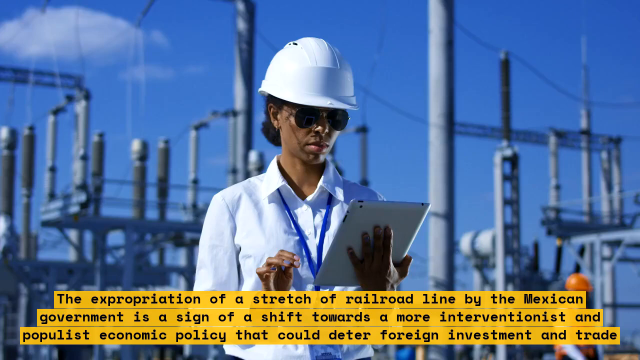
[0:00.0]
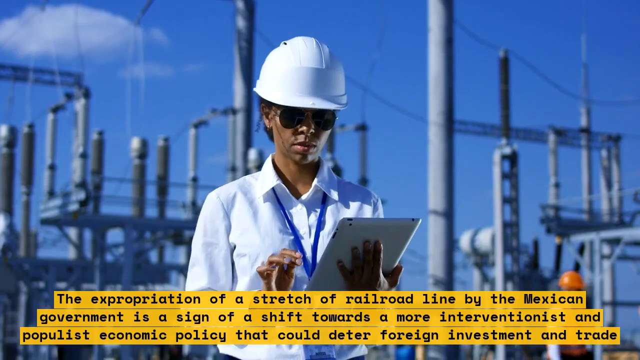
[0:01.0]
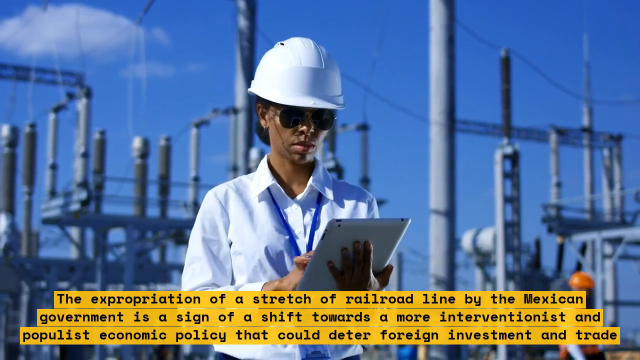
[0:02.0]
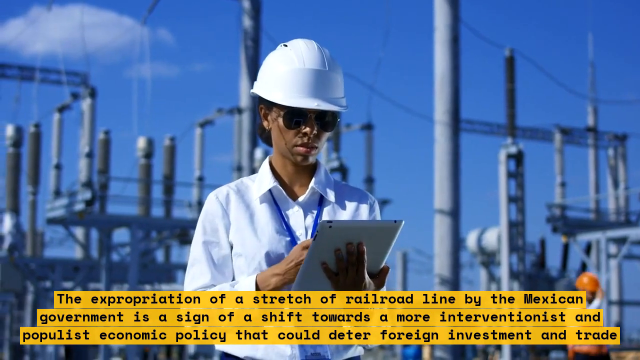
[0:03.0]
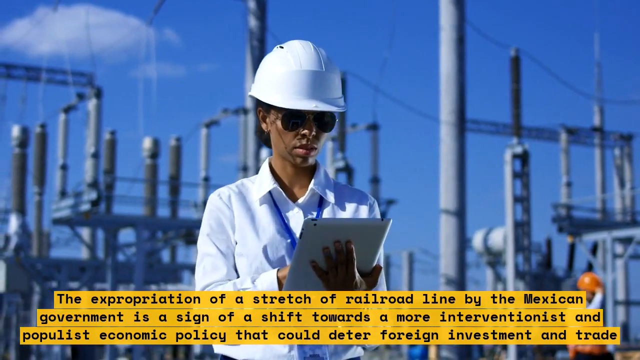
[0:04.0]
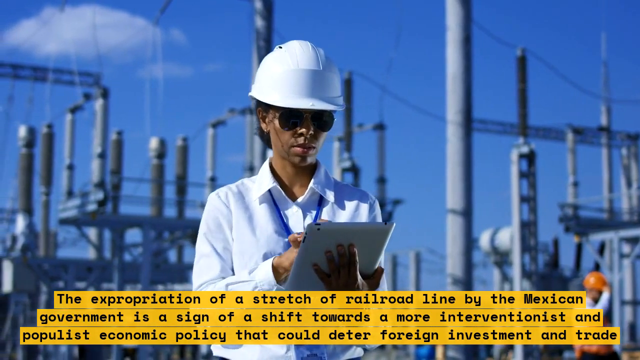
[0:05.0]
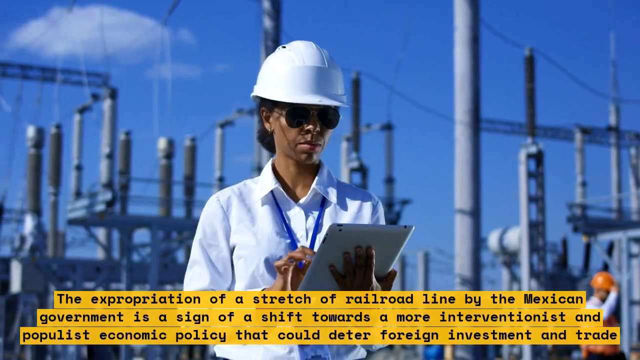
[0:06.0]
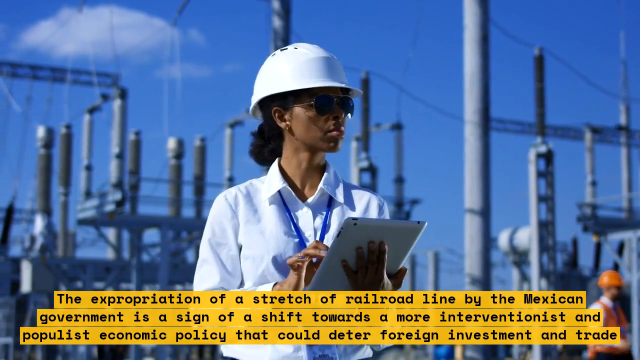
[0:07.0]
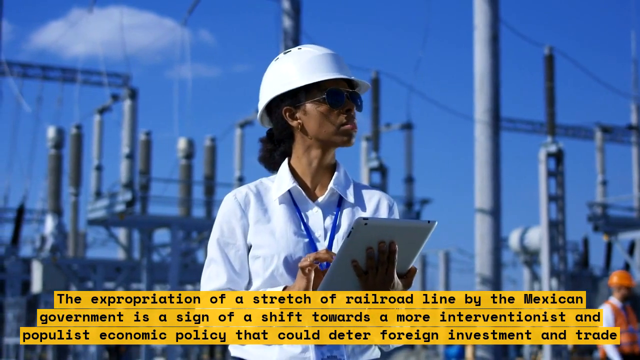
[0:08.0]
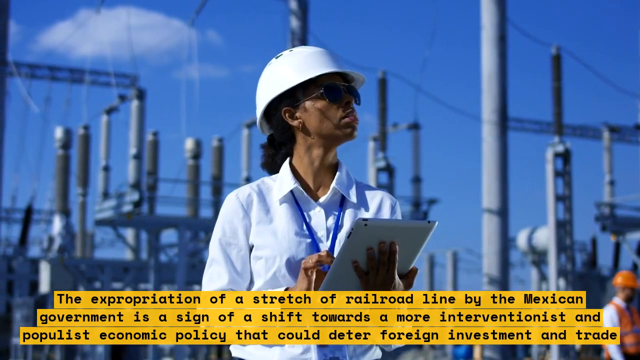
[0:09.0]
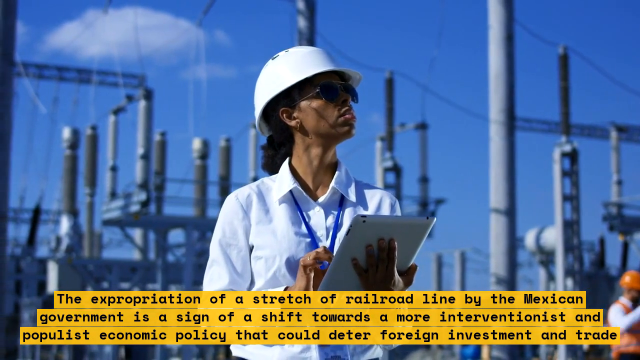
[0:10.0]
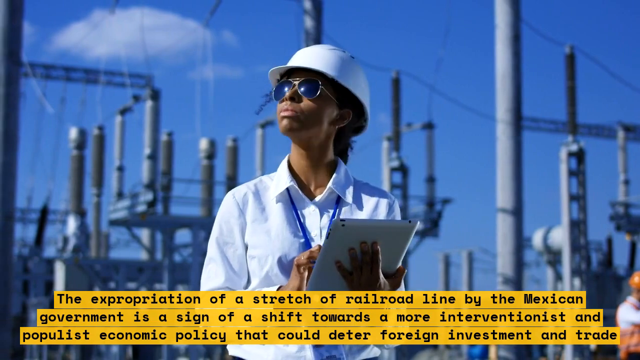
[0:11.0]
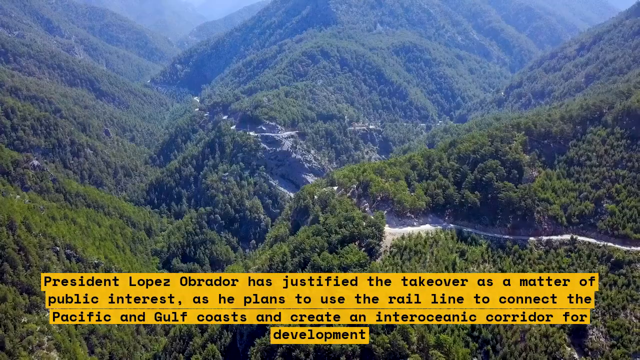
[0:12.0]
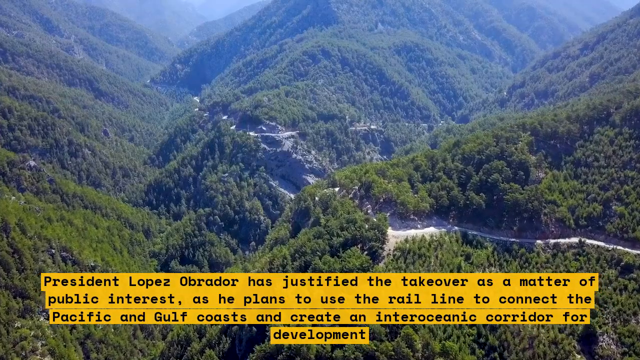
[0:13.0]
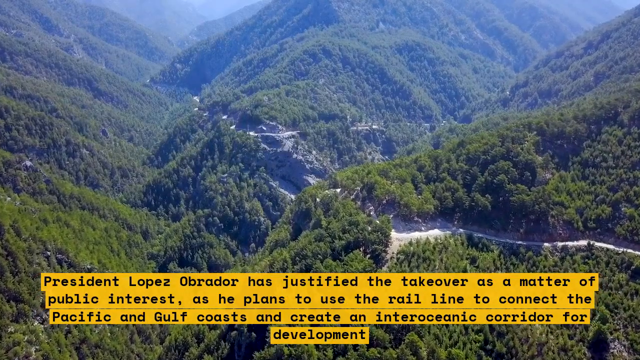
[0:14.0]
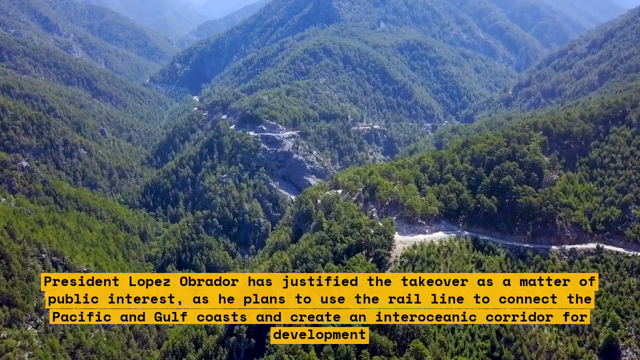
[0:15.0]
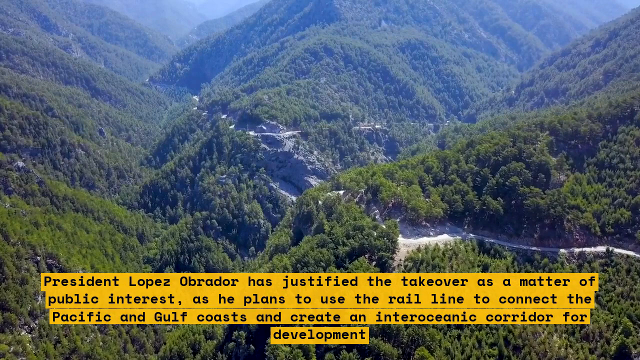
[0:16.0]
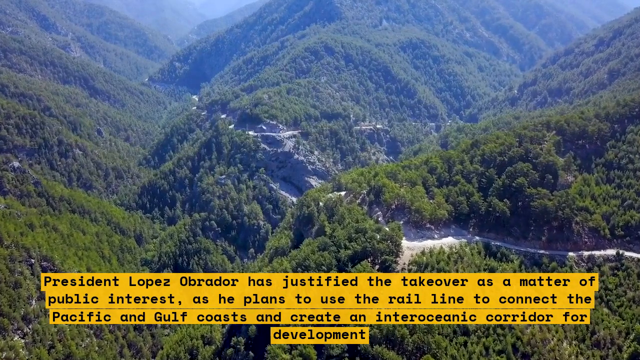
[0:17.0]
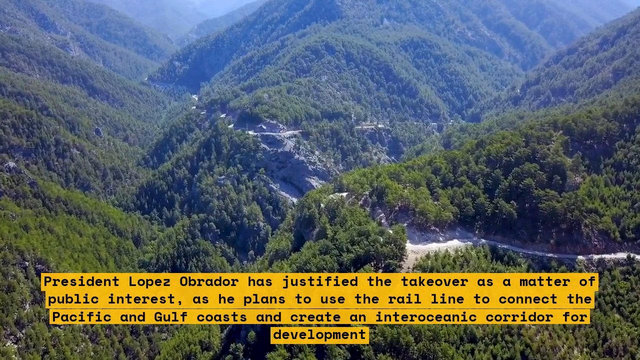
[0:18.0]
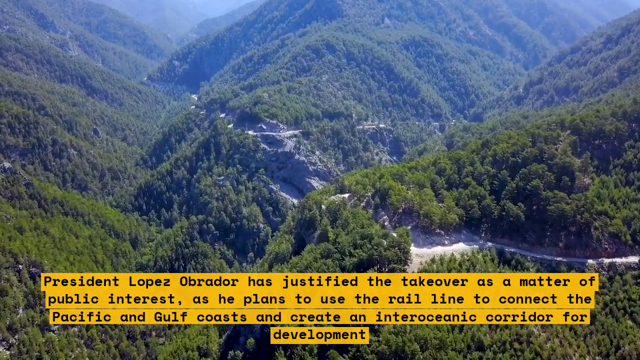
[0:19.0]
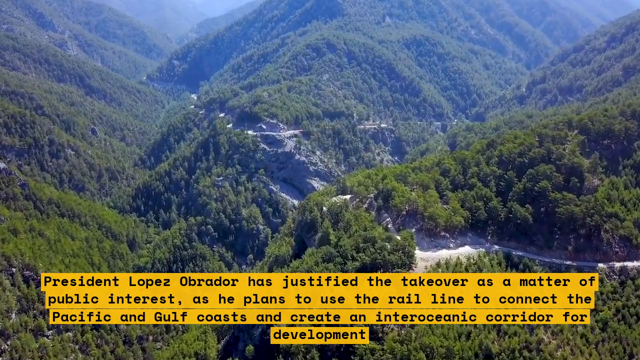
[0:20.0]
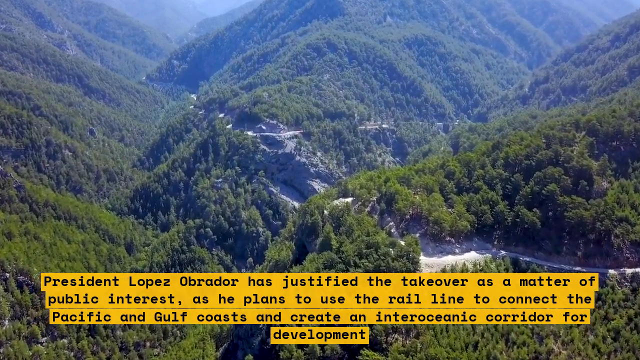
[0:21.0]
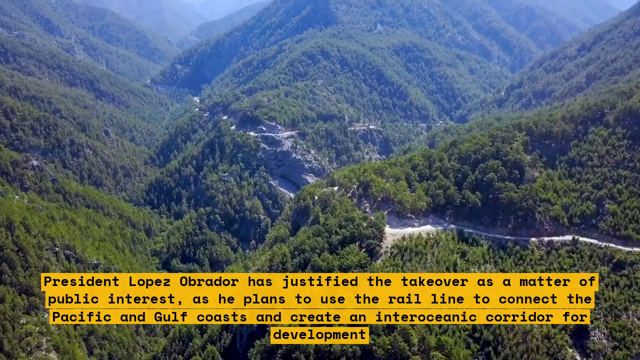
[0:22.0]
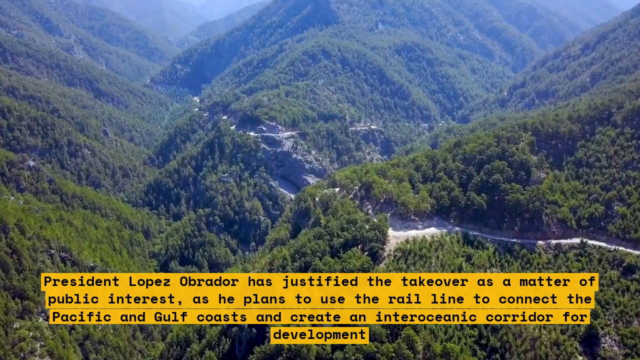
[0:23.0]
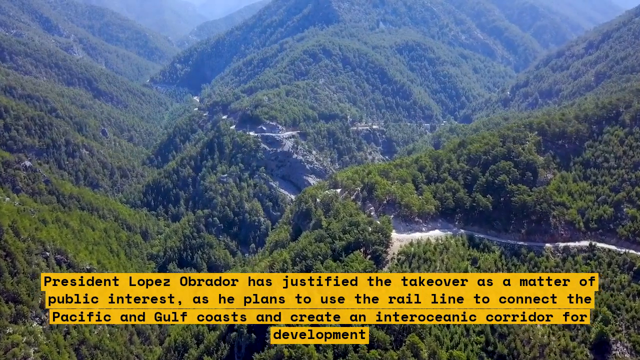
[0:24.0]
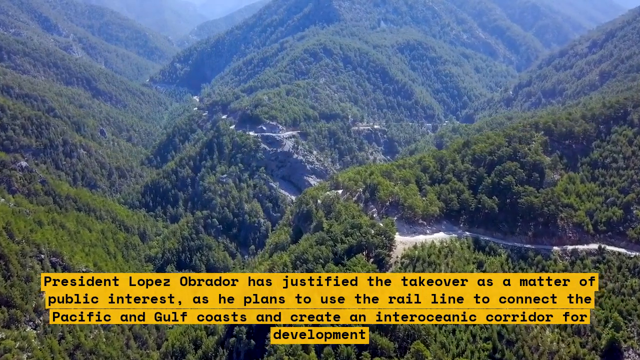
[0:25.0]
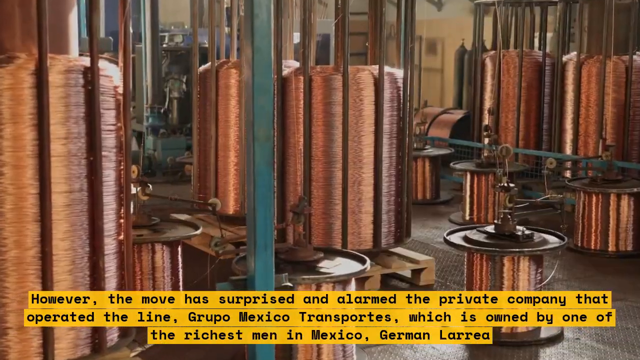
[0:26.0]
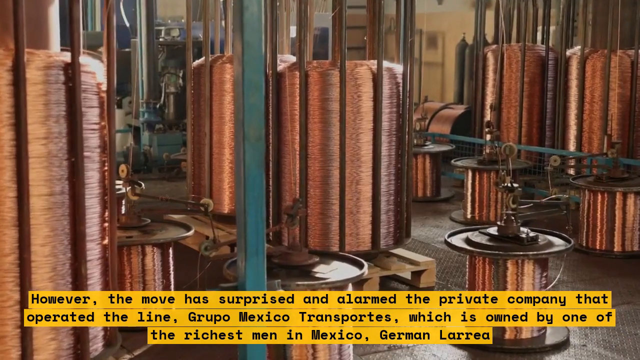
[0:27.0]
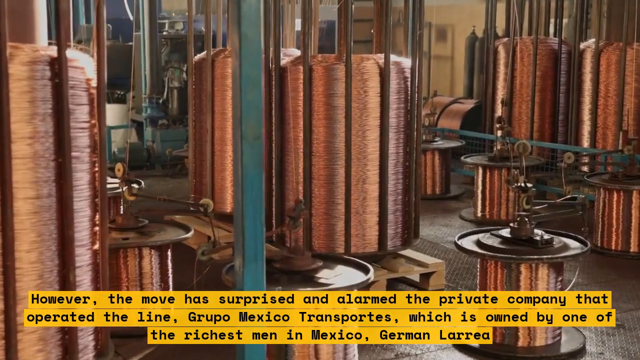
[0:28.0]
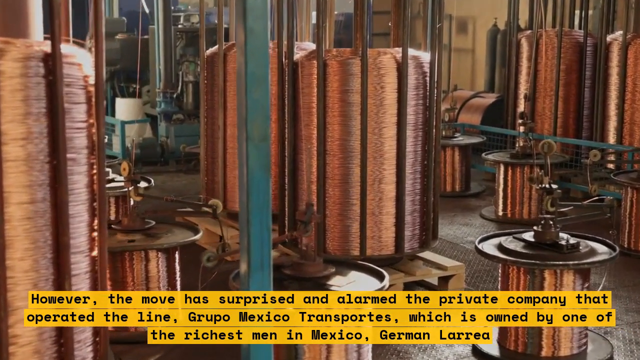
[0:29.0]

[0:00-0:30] A person wearing a hard hat stands in front of a nuclear or electrical power plant. On-screen text reads: "the expropriation of a stretch of railroad line by the Mexican government is a sign of a shift towards a more interventionist and populist economic policy that could deter foreign investment." More words scroll across the bottom of the screen in black on a yellow background. A picture of trees or a valley with a lot of greenery appears, with text reading: "President Lopez Obrado has justified the takeover as a matter of public interest as he plans to use the rail line to connect the Pacific and Gulf coasts and create an inter-ocean corridor." The camera zooms in on the green land. Further text reads: "however, the move has surprised and alarmed the private company that operates the line, Grupo Mexico Transports, which is owned by one of the richest men in Mexico, German Larrea." The inside of a place with a lot of copper wiring and copper coils is then shown.